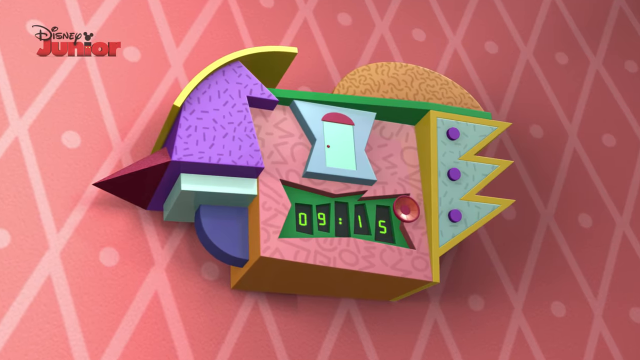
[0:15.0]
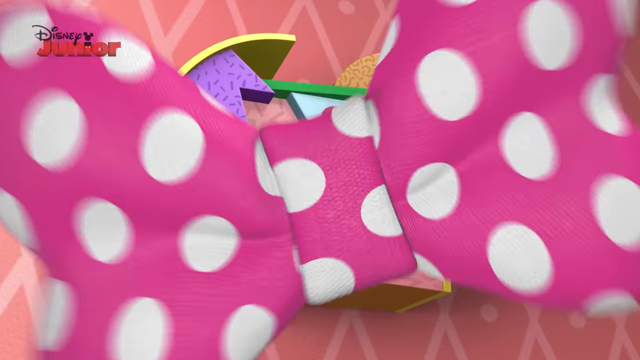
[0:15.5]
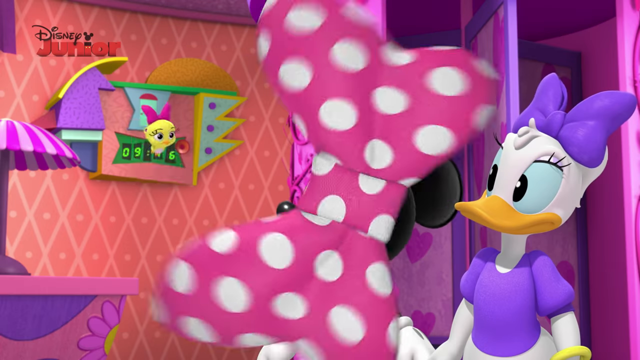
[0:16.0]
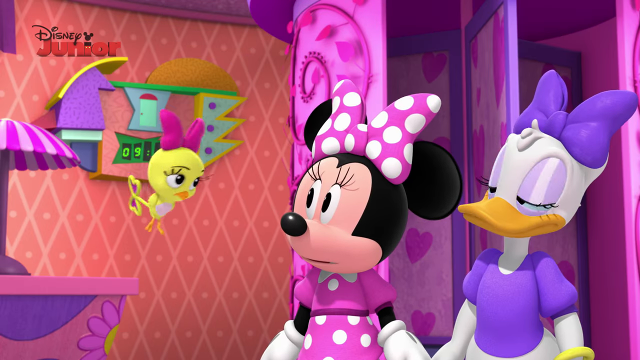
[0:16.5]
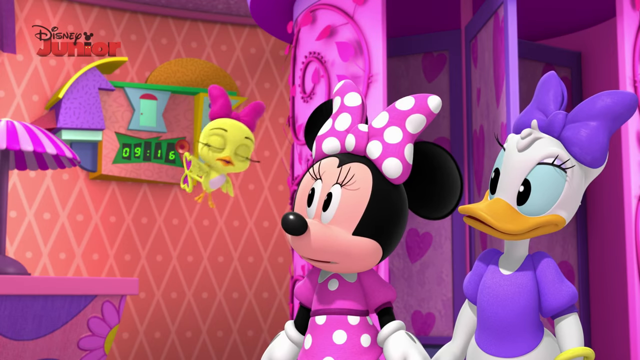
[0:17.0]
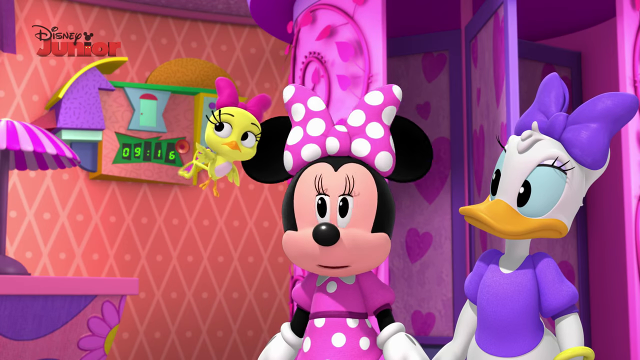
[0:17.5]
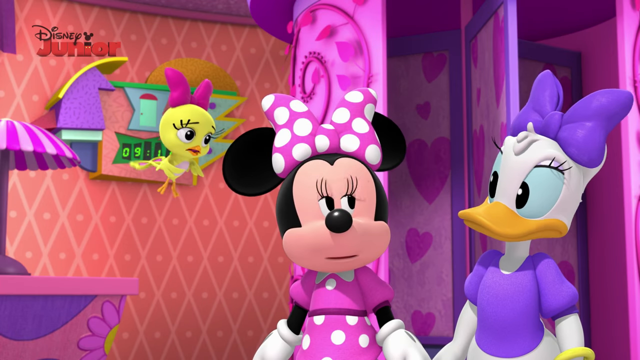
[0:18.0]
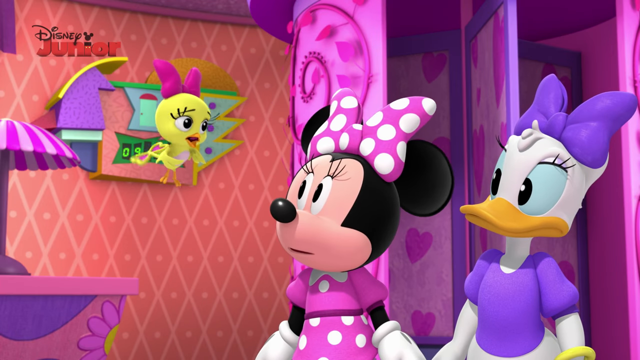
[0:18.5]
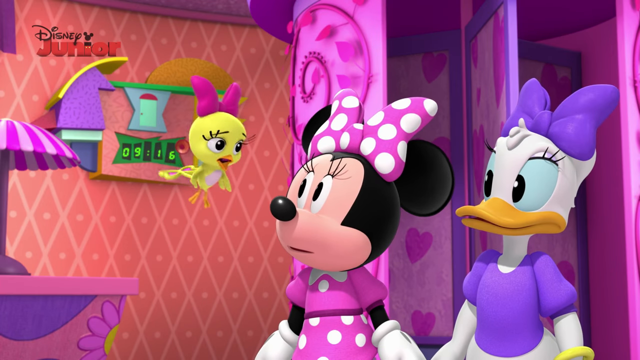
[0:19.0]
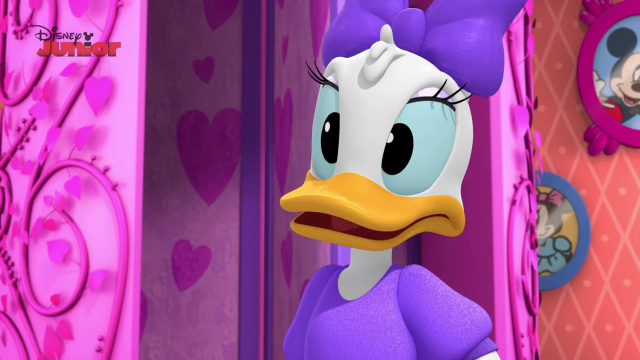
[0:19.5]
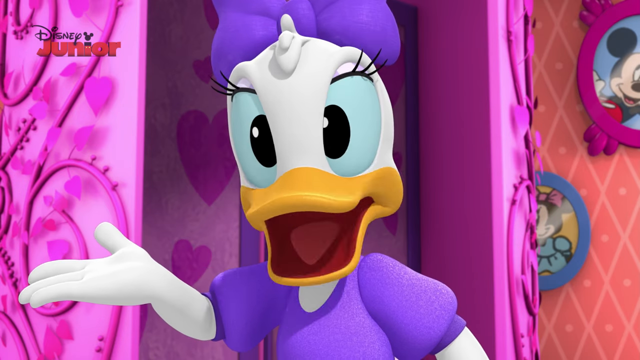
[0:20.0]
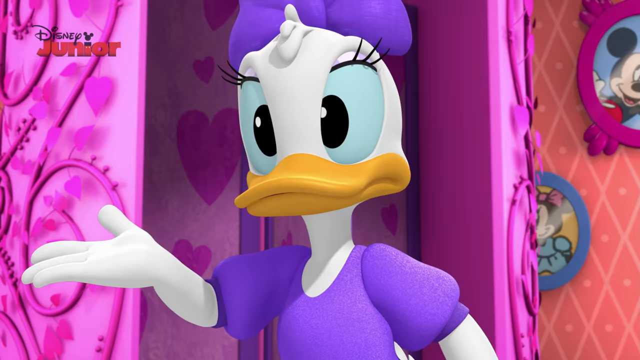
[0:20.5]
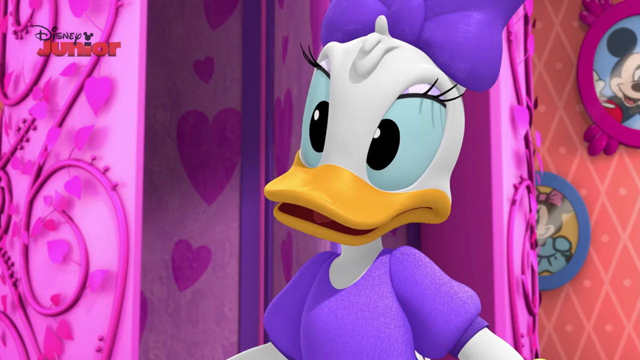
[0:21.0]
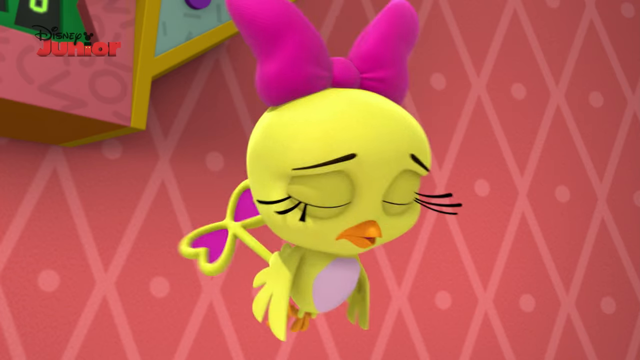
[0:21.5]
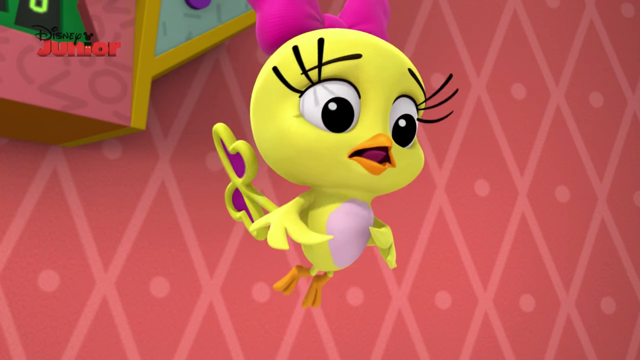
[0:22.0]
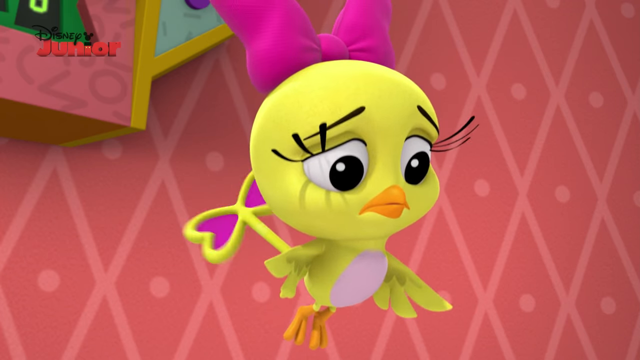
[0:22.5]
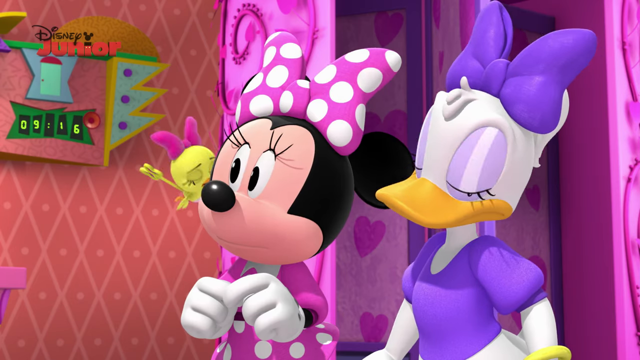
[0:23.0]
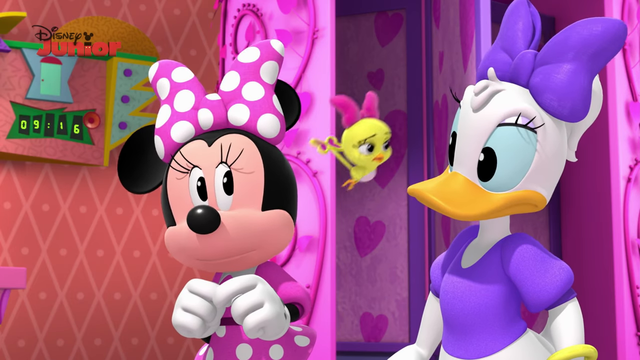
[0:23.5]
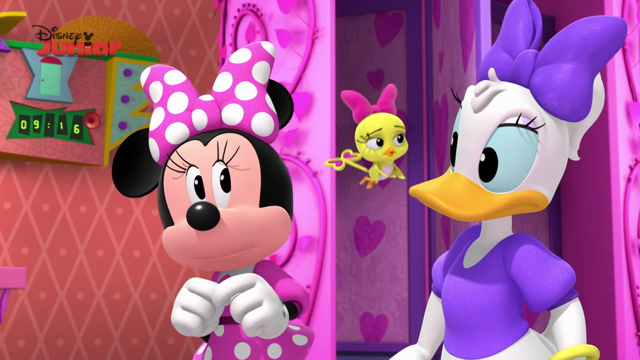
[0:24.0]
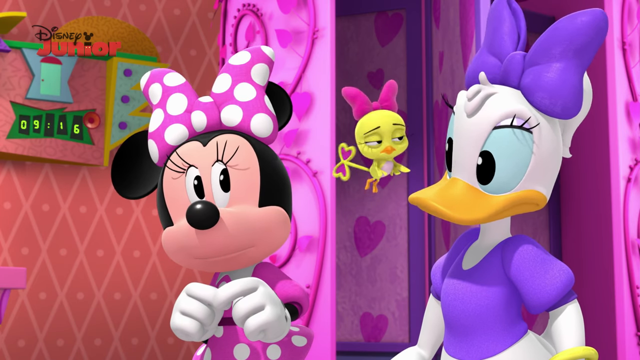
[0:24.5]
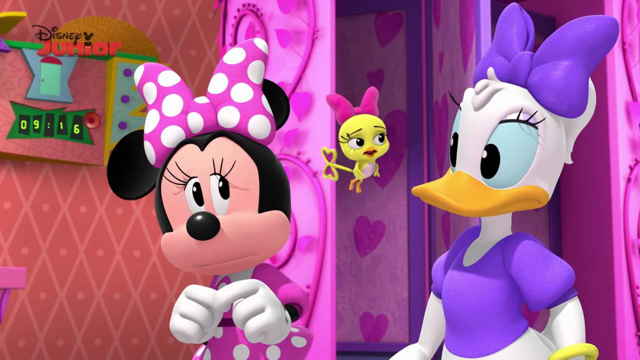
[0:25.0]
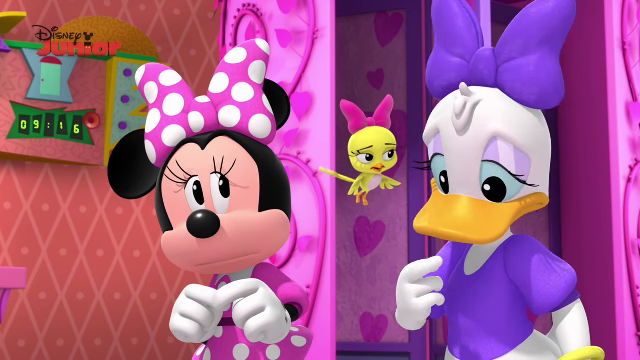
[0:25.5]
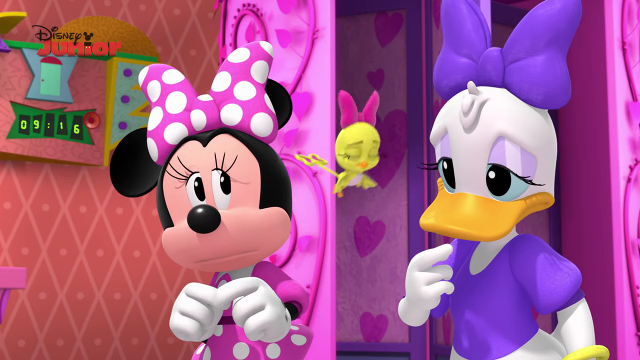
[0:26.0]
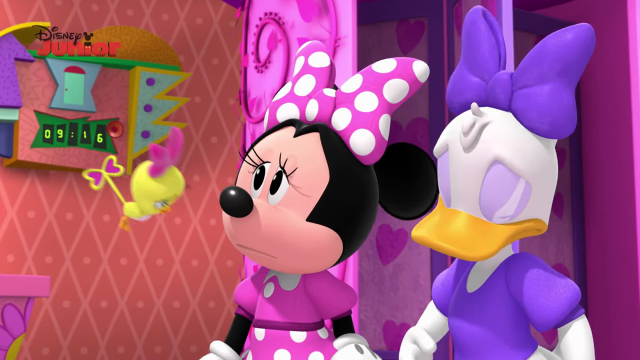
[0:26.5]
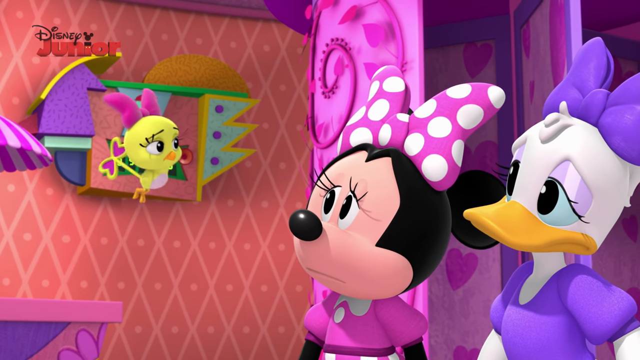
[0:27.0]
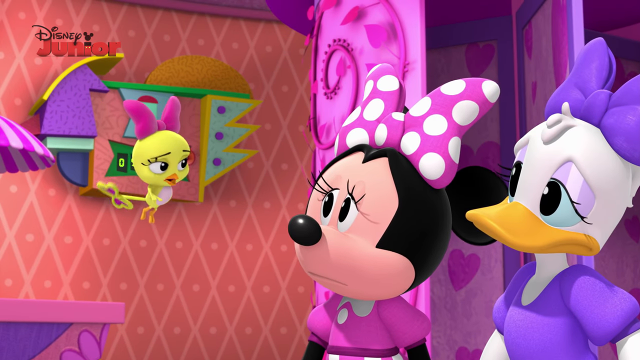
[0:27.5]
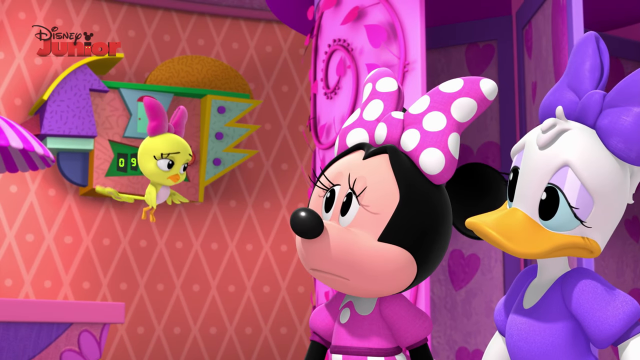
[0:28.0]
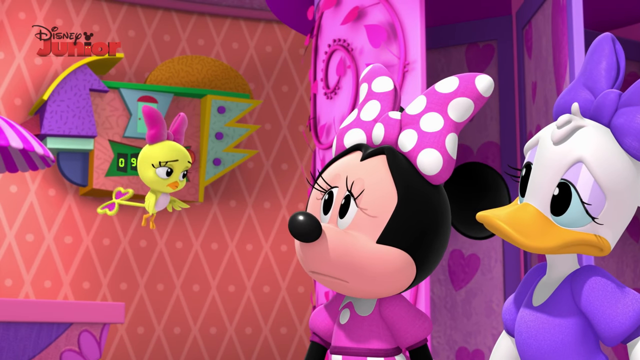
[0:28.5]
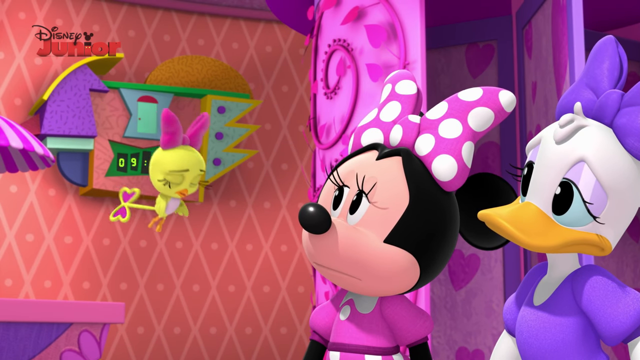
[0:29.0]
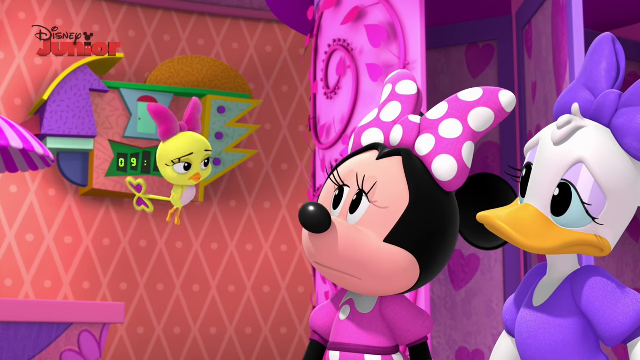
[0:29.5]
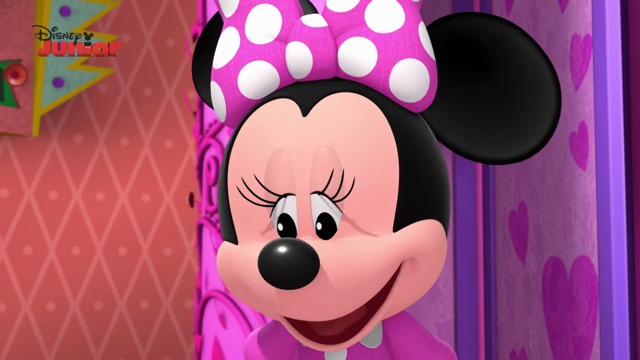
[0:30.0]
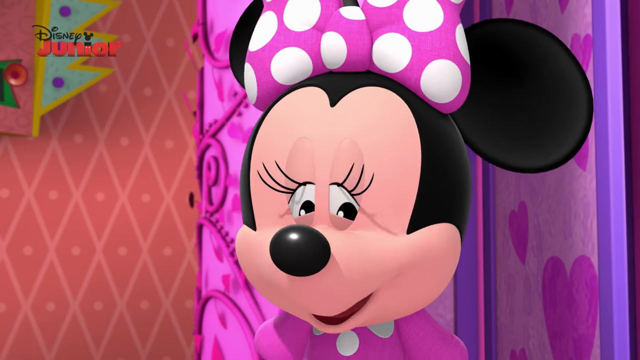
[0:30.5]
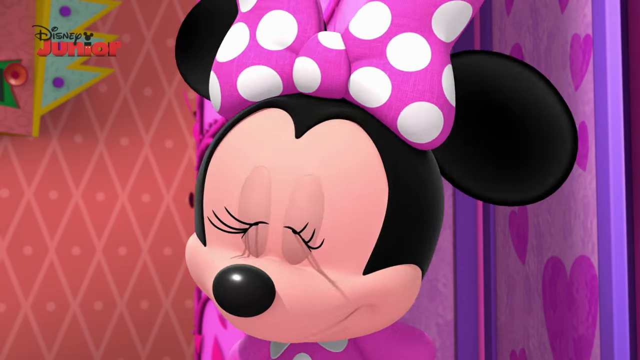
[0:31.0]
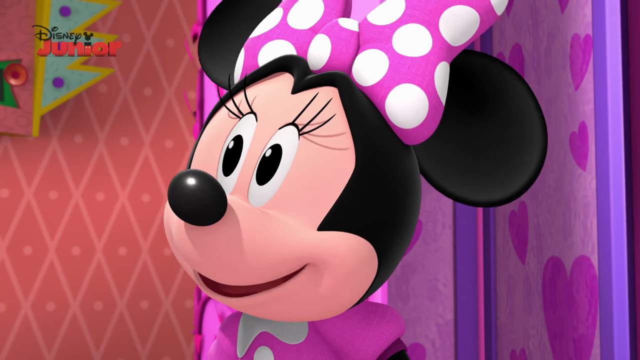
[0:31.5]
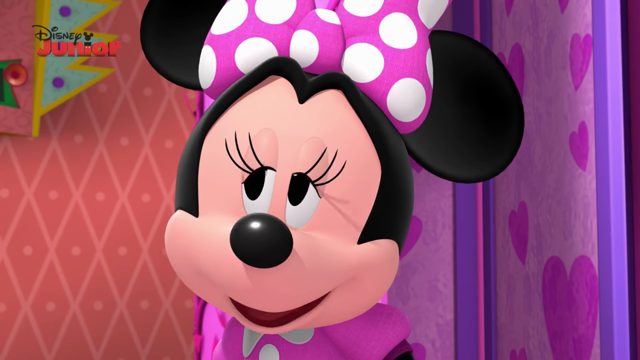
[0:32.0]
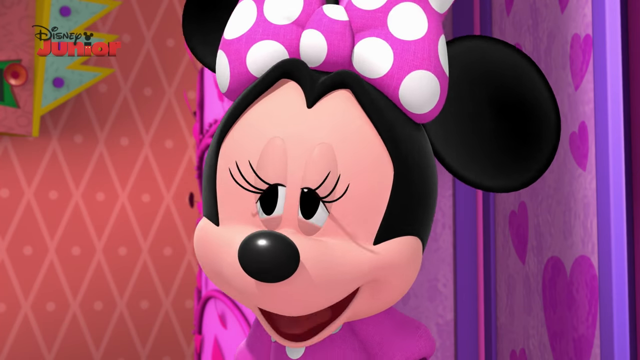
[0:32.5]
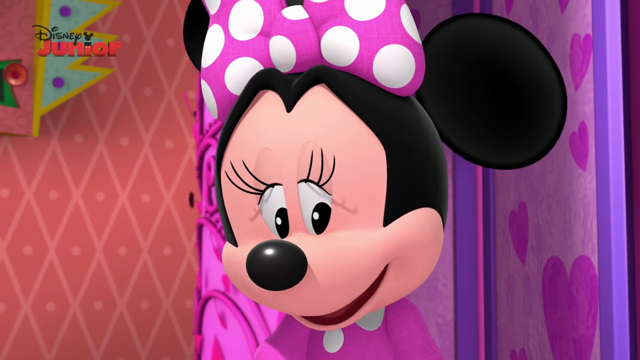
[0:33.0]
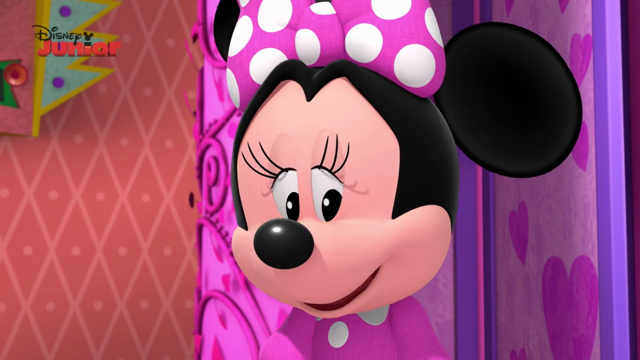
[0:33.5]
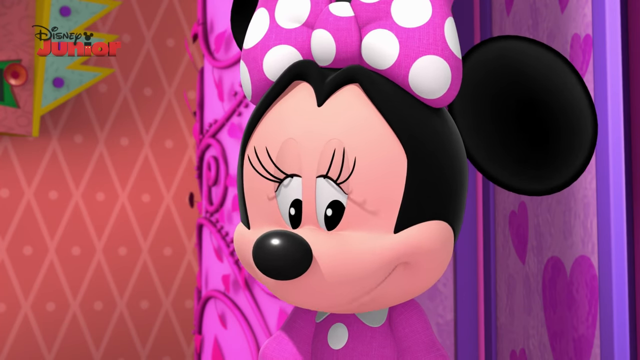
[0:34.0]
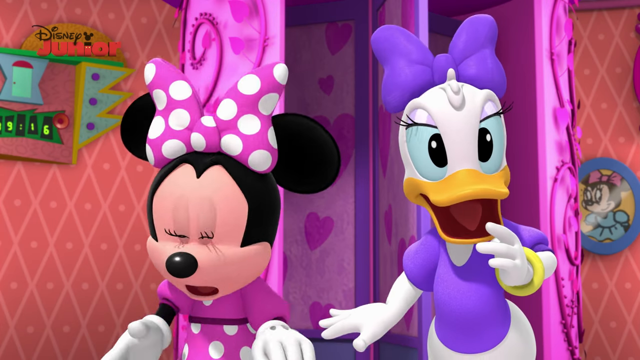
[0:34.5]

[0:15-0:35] A close-up shows the new modern clock on the wall, its time reading "09:15". After the zoom in on the clock comes a spinning purple-pink polka-dotted bow transition. In the new scene, Daisy and Minnie are on the right side of the screen facing a yellow flying bird that has apparently flown out of the clock. The little yellow bird has a neon pink bow on top of her very large head and a spinning clock wind-up key as her tail; she is the cuckoo from the cuckoo clock. She talks to Minnie and Daisy and kind of gestures behind her at the clock on the wall. Daisy and Minnie look at each other, and then a close-up shows Daisy's face as she talks directly to the camera, probably answering the cuckoo bird. A close-up of the cuckoo bird follows as she talks back in reply. The cuckoo bird then flies behind Minnie and hovers between the two characters, talking to both. Minnie stays quiet throughout this exchange. Minnie and Daisy look quite worried, and everybody looks sad and worried. A close-up of Minnie's face follows as she finally talks; she looks up at the bird and also looks down and to the right kind of bashfully. After Minnie finishes, a direct view shows Minnie and Daisy both pulling backward and gasping in surprise, though what has surprised them is not shown.